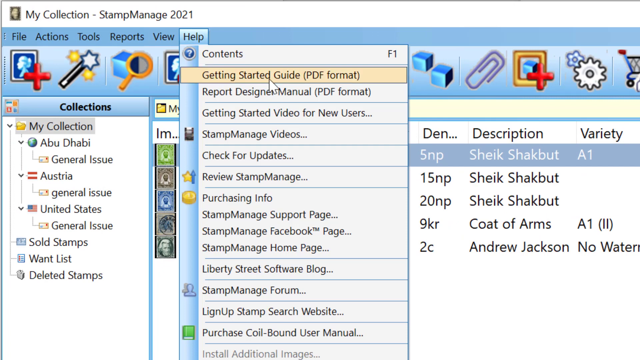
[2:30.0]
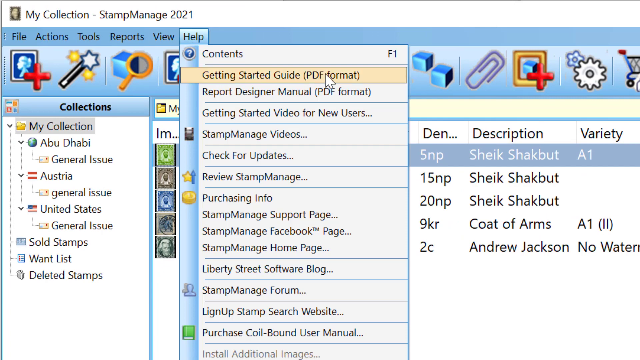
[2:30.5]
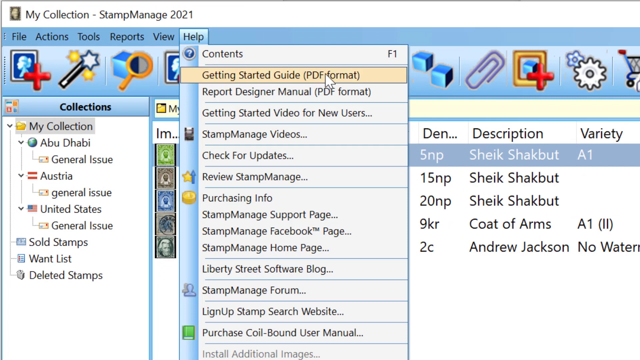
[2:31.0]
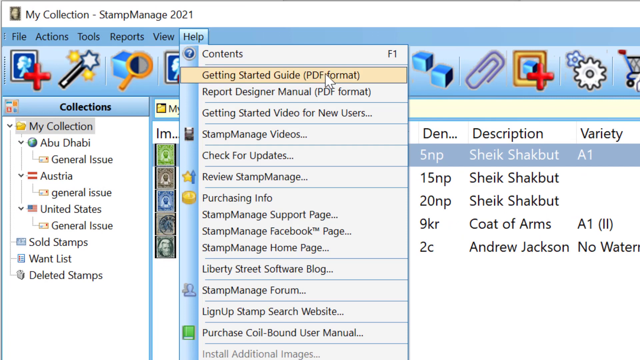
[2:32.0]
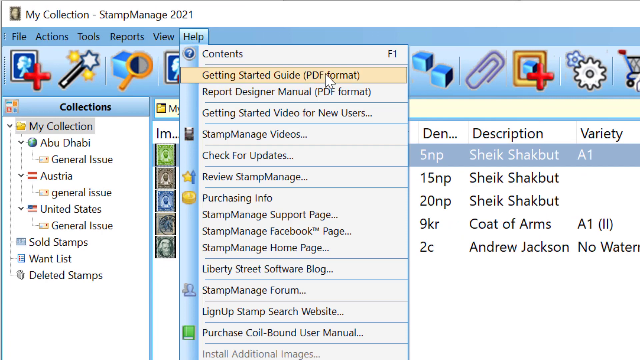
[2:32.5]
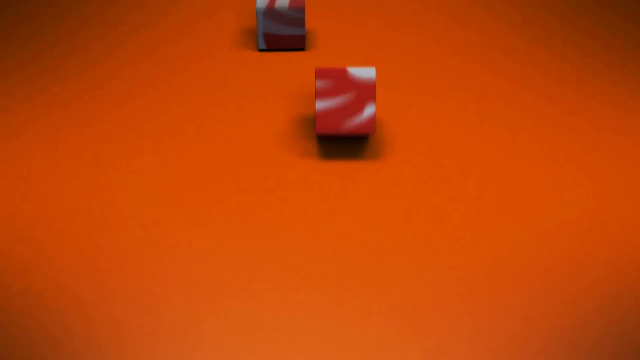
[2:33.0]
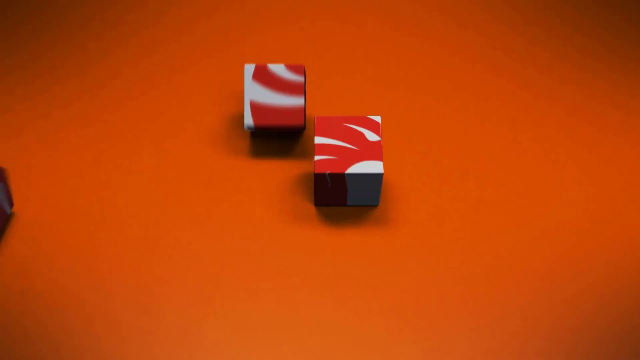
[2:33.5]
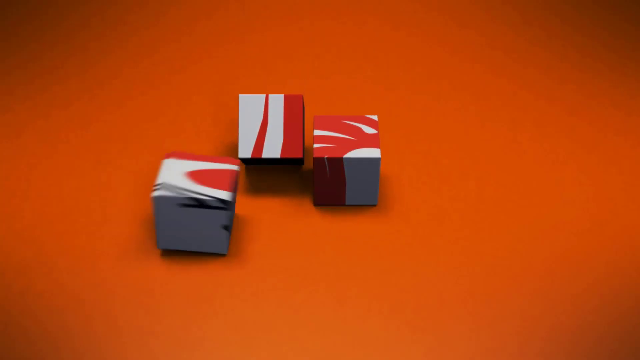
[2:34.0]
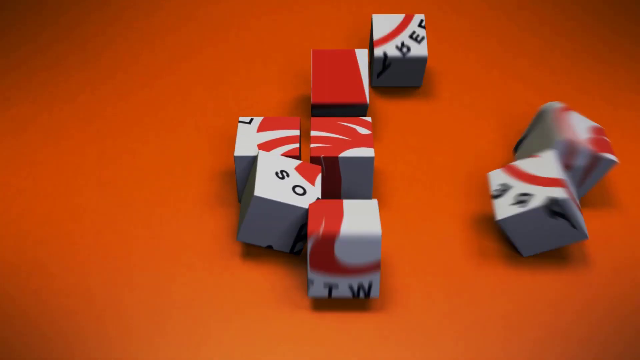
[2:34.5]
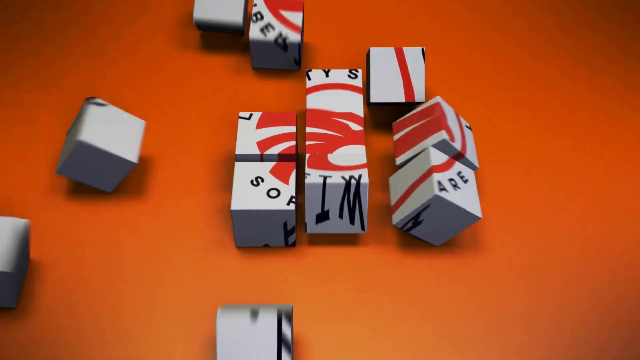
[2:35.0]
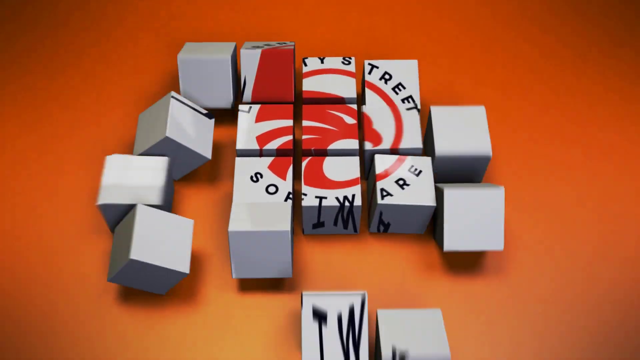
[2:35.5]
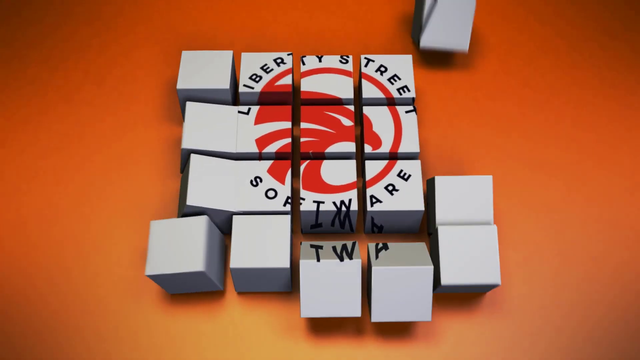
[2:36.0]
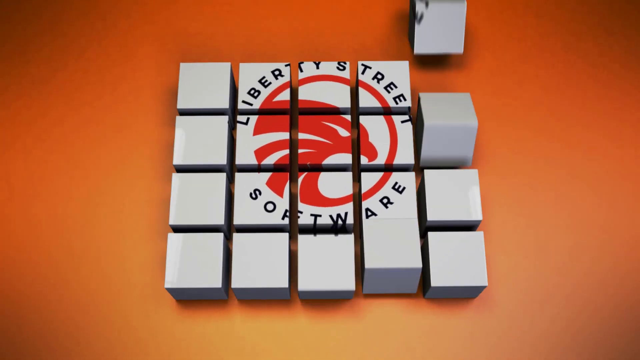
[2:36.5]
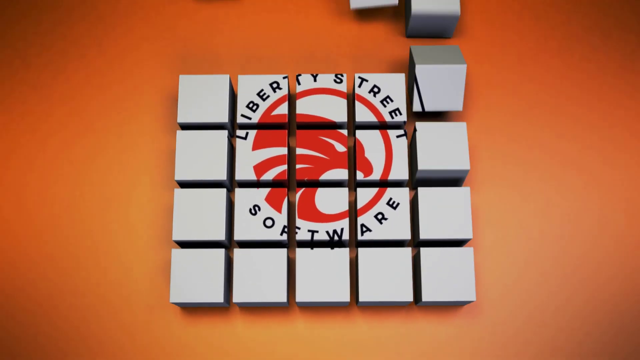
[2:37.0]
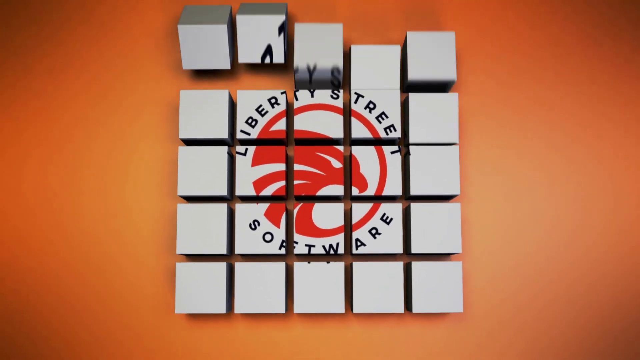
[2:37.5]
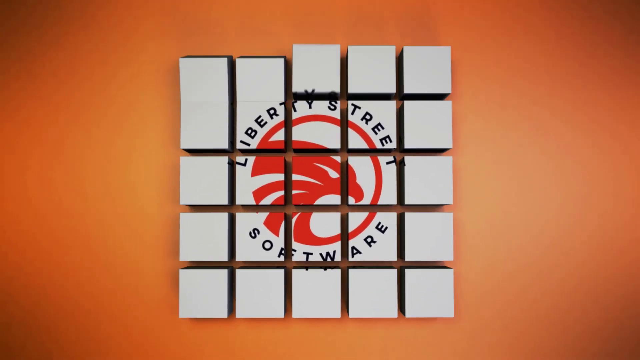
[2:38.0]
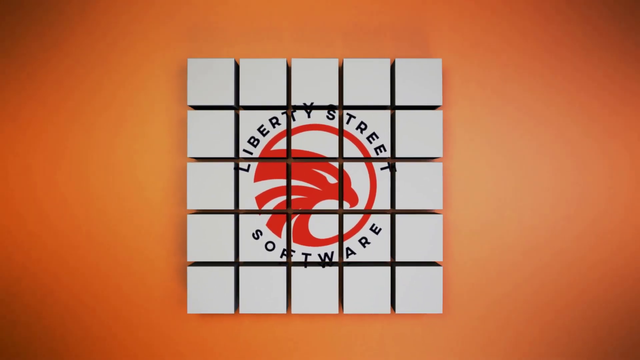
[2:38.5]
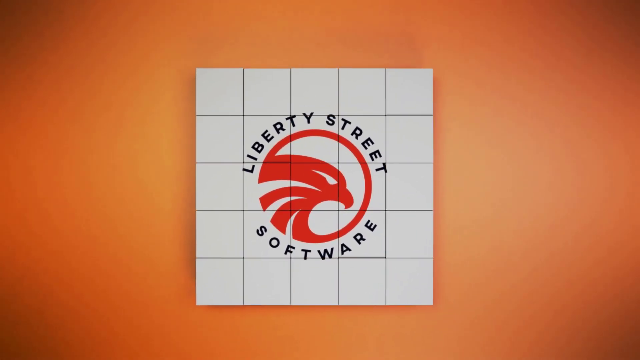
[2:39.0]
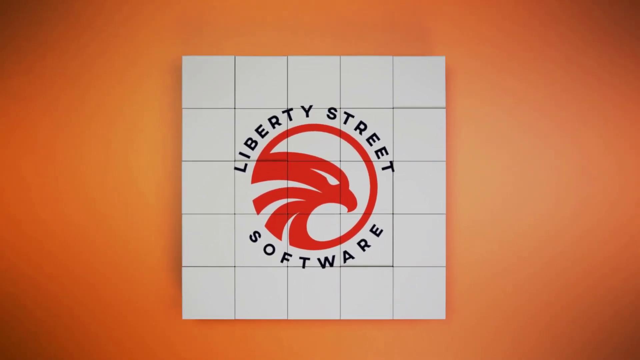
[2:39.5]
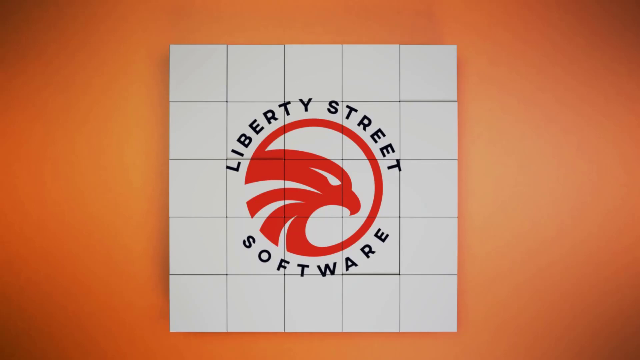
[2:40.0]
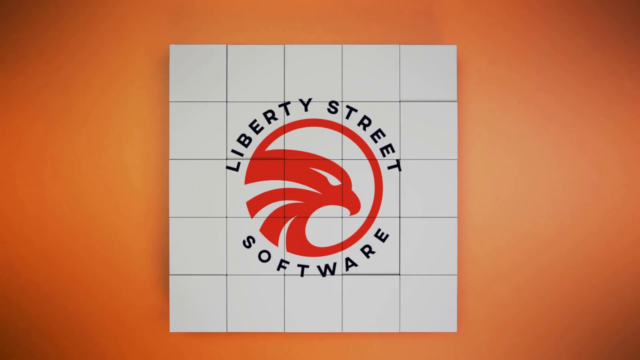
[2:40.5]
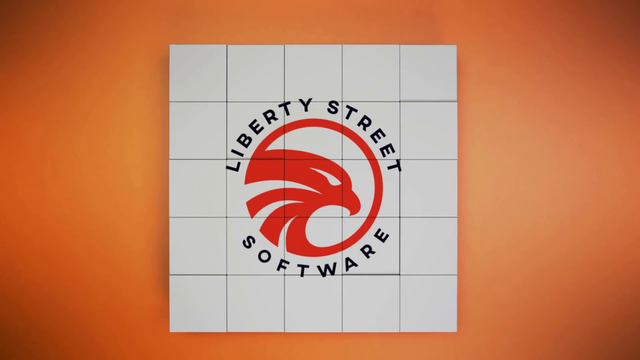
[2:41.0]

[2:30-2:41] A zoomed-in screen recording shows the application, with "My Collection Stamp Manage 2021" at the top of the window; this appears to be the application's home page. There are selectable links at the top. The person selects "Help", which opens a drop-down menu, moves the cursor over a button reading "Getting Started Guide PDF Format", and selects it. A graphic or animation then appears reading "Liberty Street Software", with a bunch of cubes rolling into the screen on an orange background to create the icon.